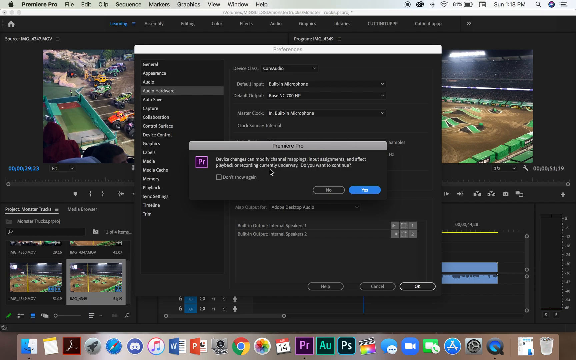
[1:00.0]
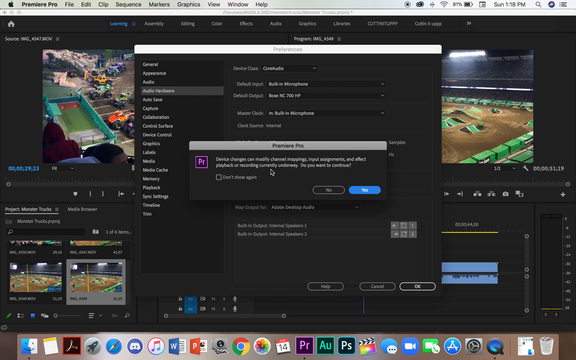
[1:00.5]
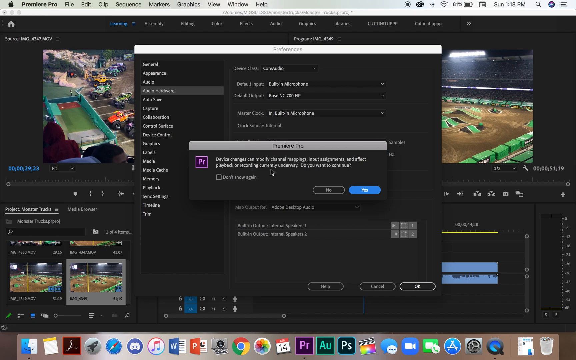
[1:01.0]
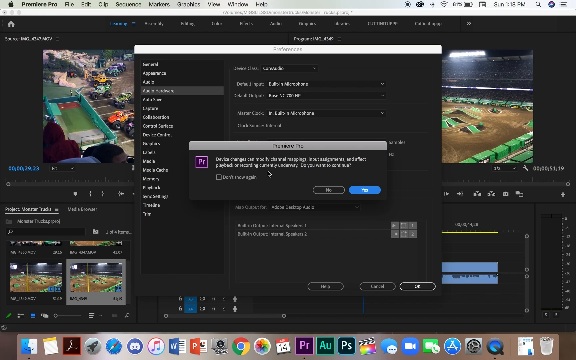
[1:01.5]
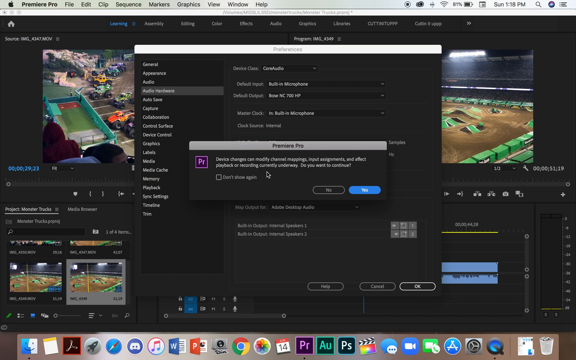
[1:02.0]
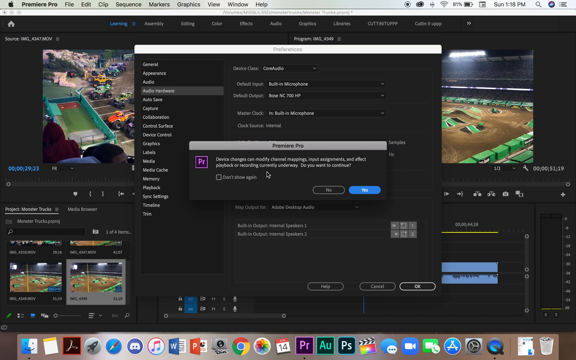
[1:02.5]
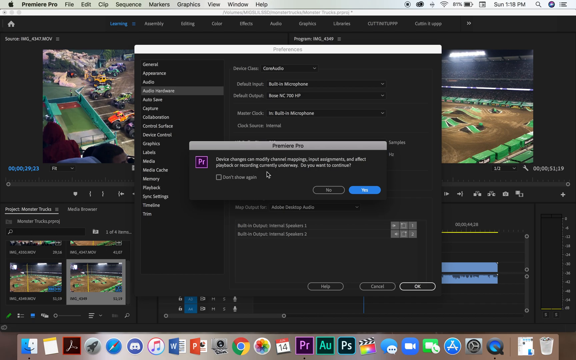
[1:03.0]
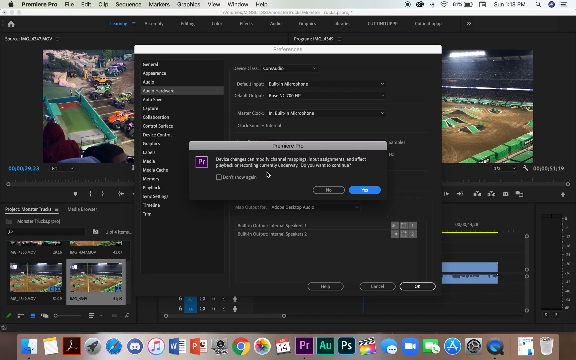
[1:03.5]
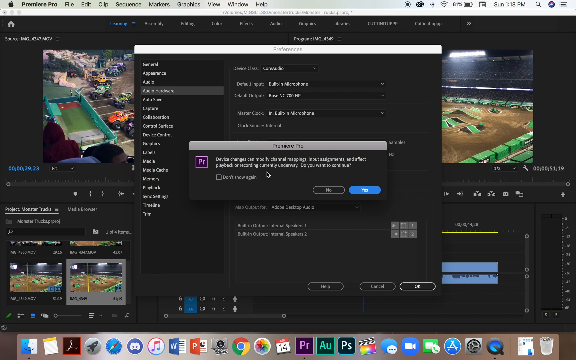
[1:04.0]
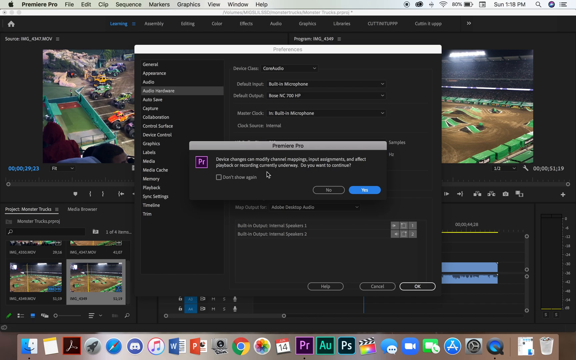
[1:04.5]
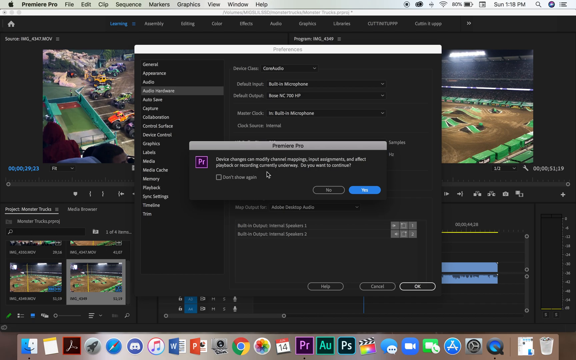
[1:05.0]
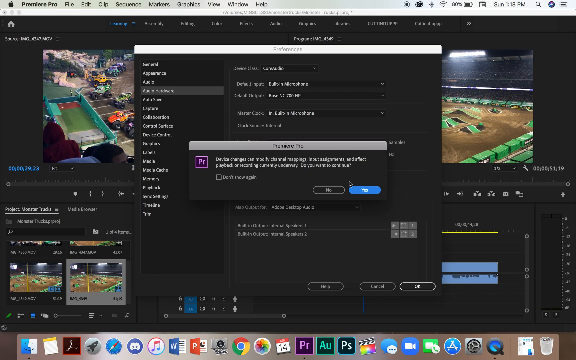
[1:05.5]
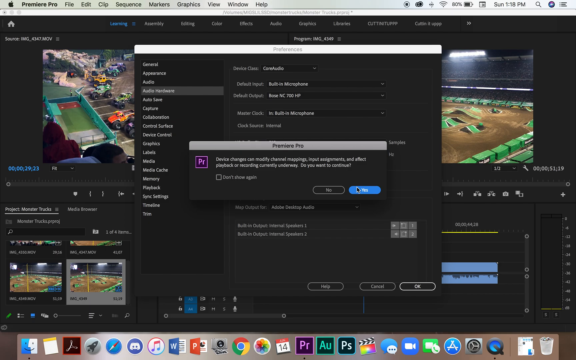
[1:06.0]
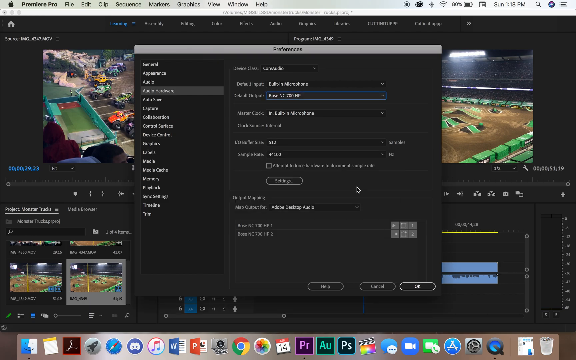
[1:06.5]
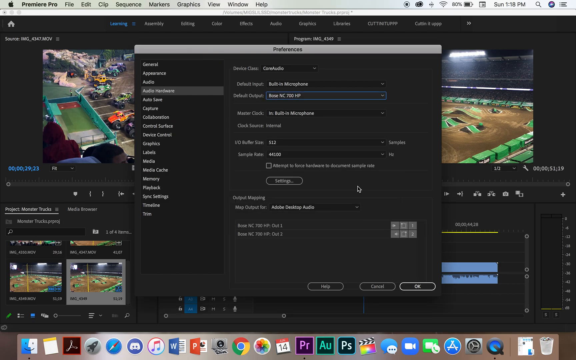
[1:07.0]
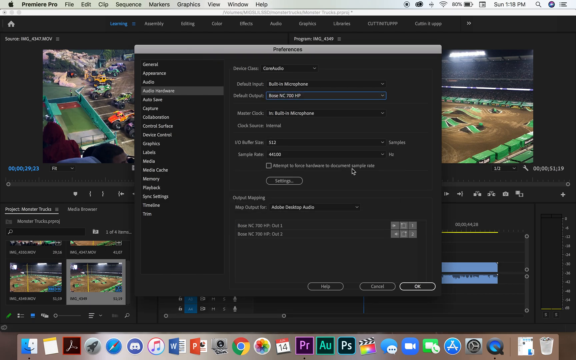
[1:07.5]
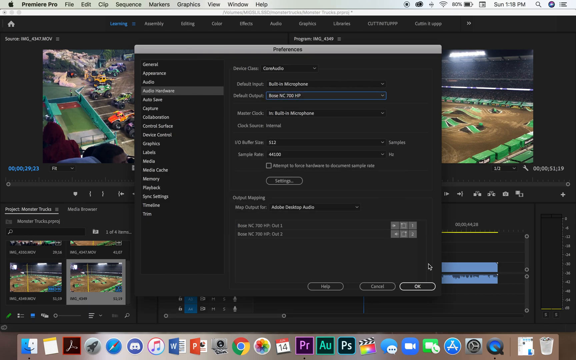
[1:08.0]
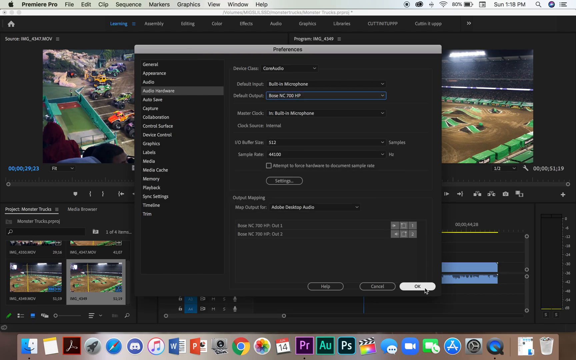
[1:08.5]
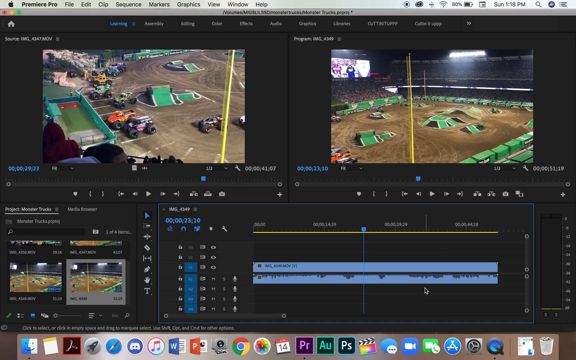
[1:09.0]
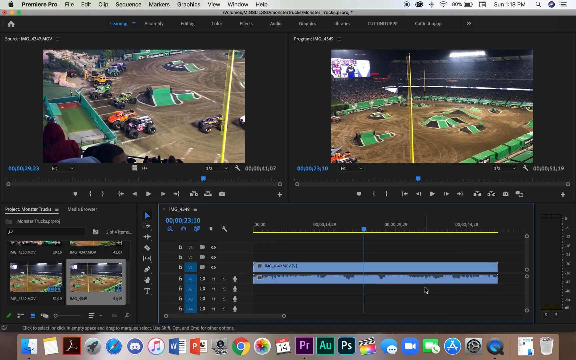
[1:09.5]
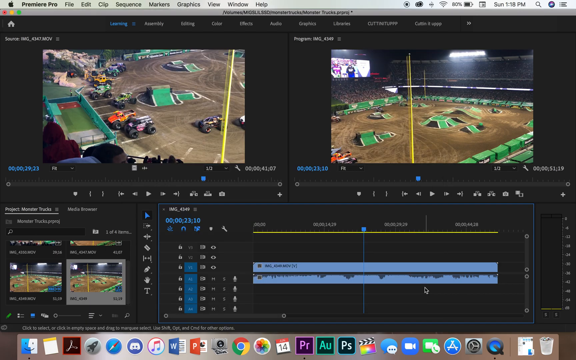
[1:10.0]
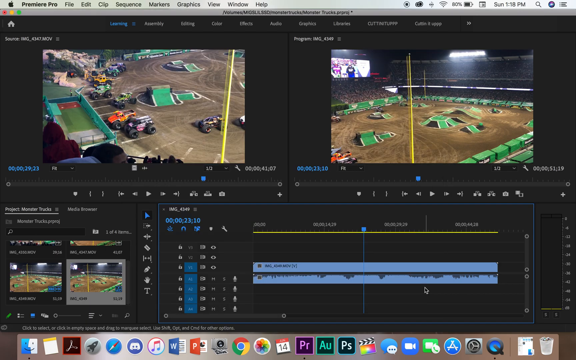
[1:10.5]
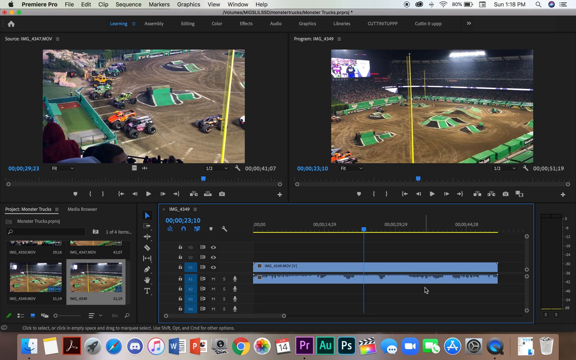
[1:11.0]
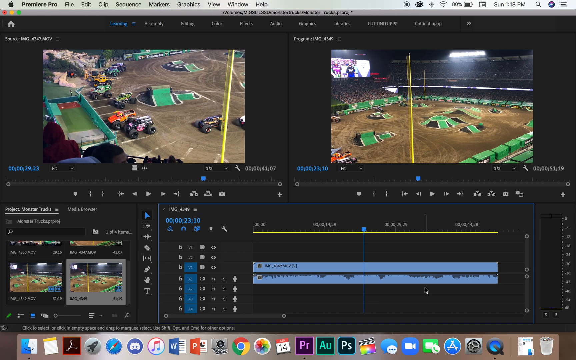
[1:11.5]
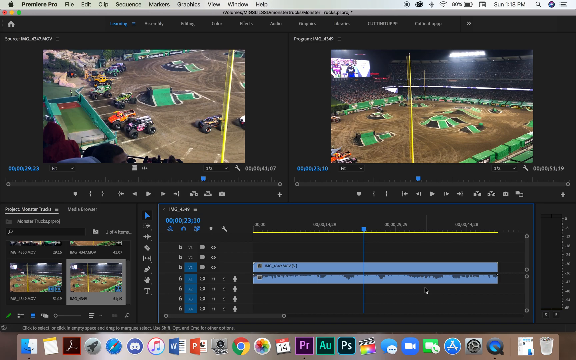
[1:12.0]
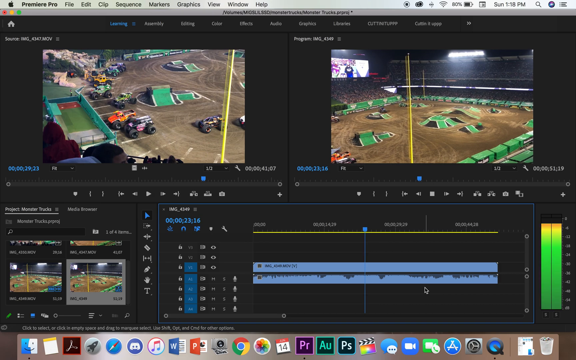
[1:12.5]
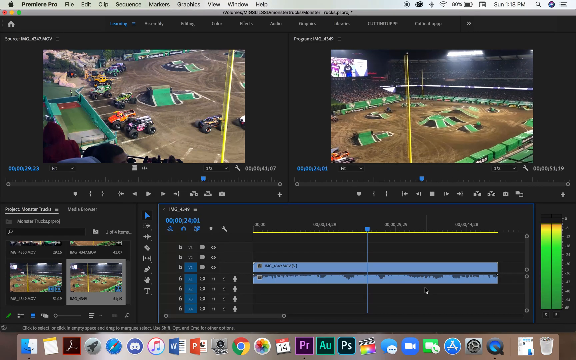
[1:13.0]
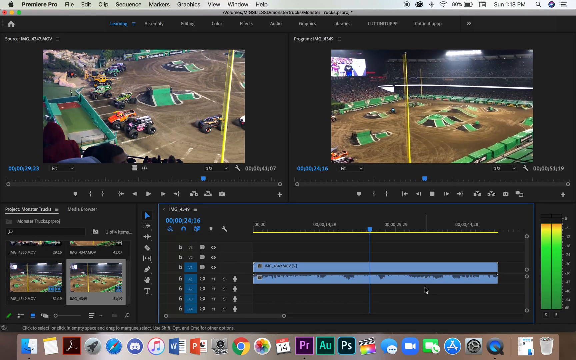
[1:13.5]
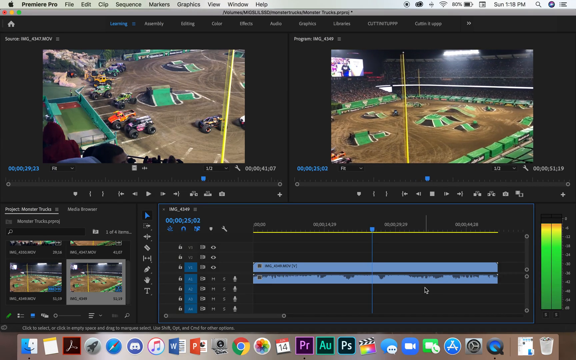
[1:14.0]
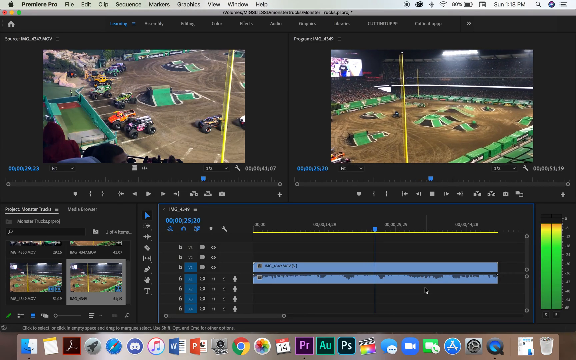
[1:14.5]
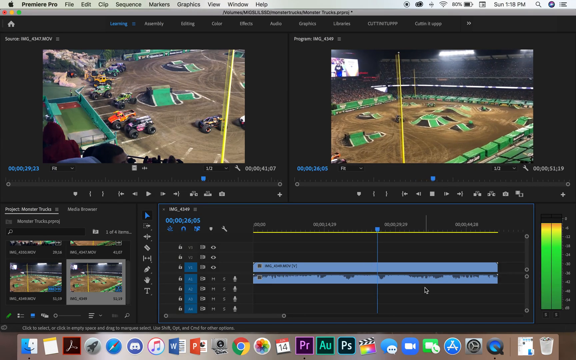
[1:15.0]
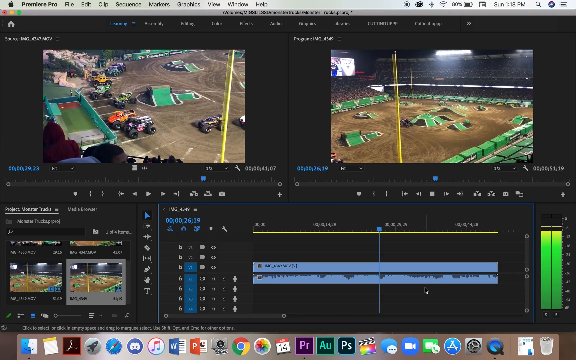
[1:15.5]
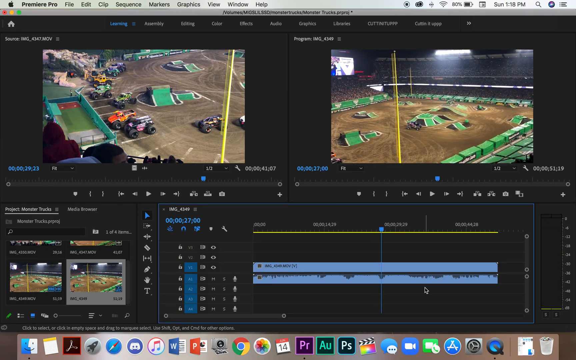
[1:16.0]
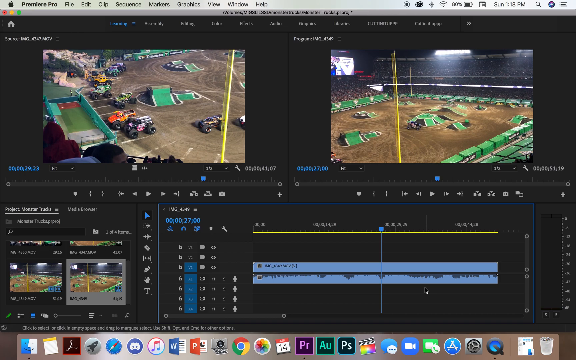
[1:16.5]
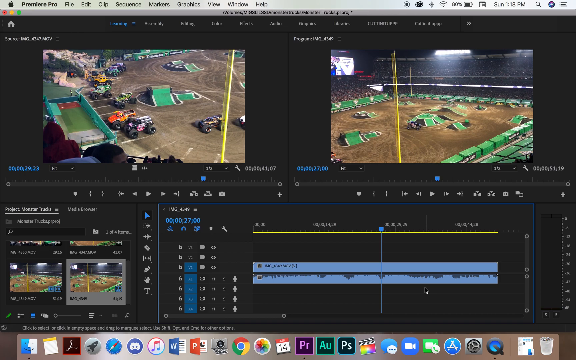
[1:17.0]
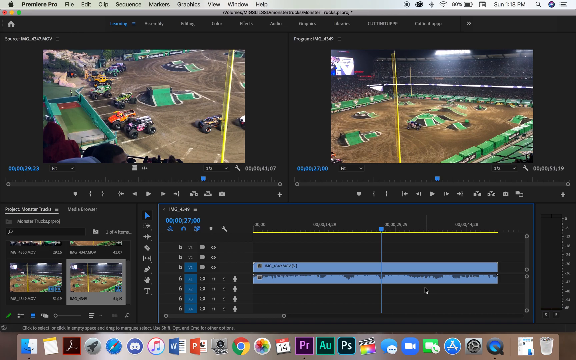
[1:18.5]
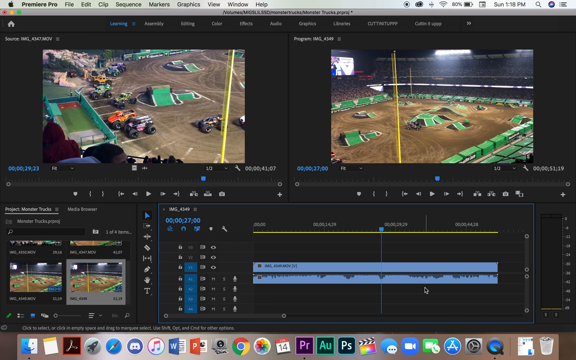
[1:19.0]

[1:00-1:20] In the audio preferences, a message appears that begins "Device can modify channel mappings" and mentions playback or recordings. A prompt asks whether to continue, with yes or no options, and yes is chosen. The video is rewound from 29 to 27 while the volume increases. The Premiere Pro settings list includes General, Appearance, Audio, Audio Save, Capture, Collaboration, Control Surface, Device Control, Graphics, Labels, Media, Media Cache, Memory, Playback, and Sync Settings; other items are blurry. The app's background is black.